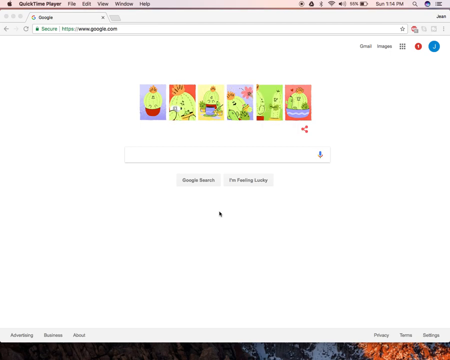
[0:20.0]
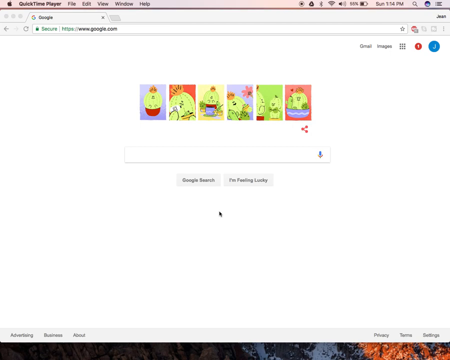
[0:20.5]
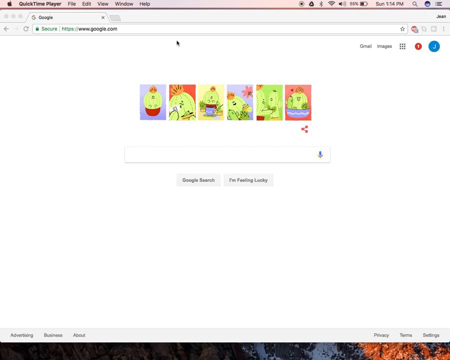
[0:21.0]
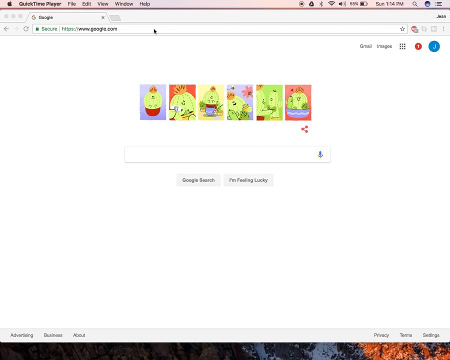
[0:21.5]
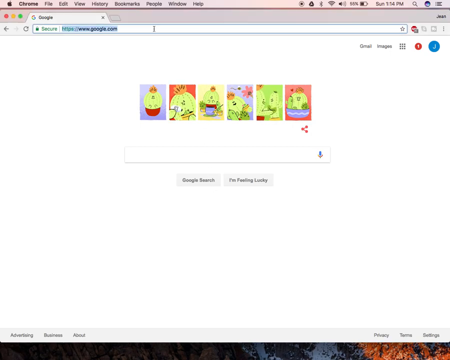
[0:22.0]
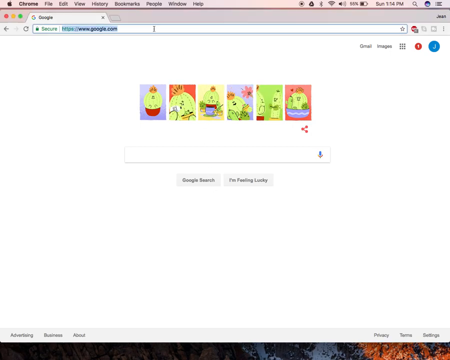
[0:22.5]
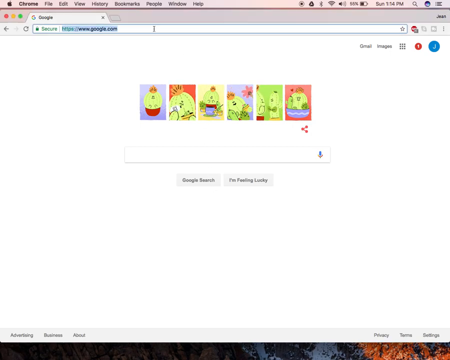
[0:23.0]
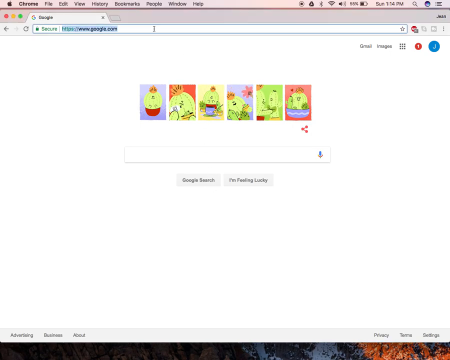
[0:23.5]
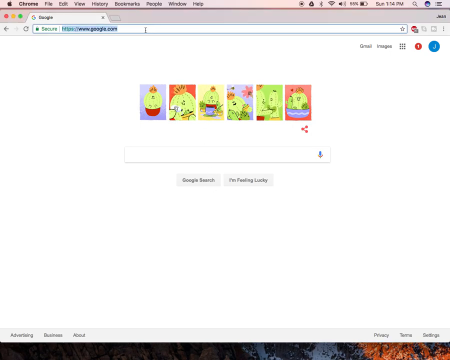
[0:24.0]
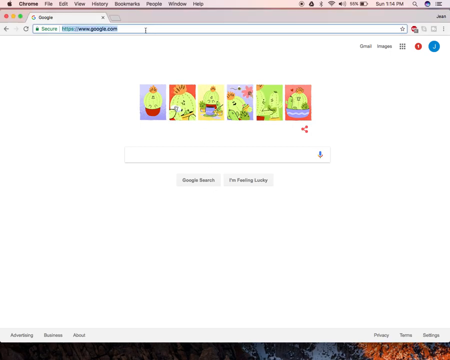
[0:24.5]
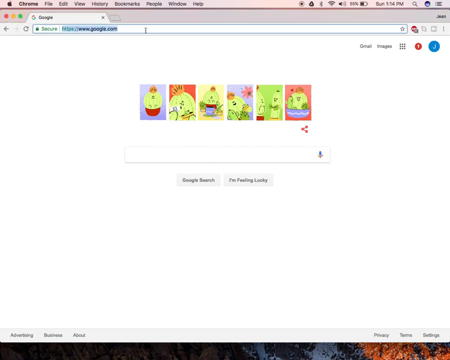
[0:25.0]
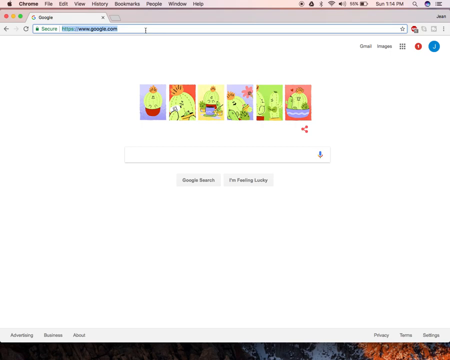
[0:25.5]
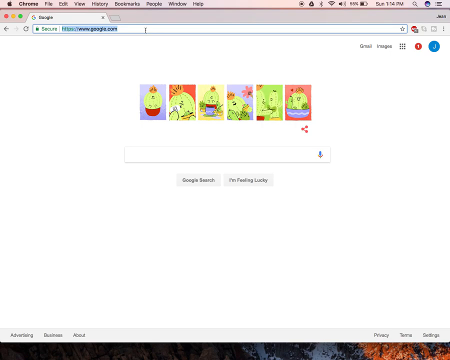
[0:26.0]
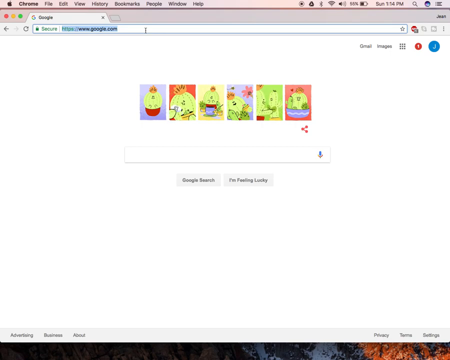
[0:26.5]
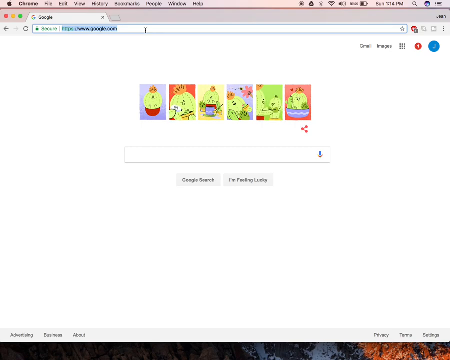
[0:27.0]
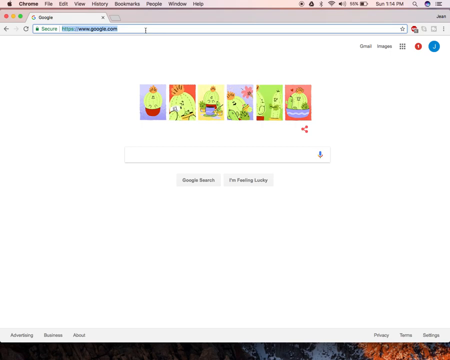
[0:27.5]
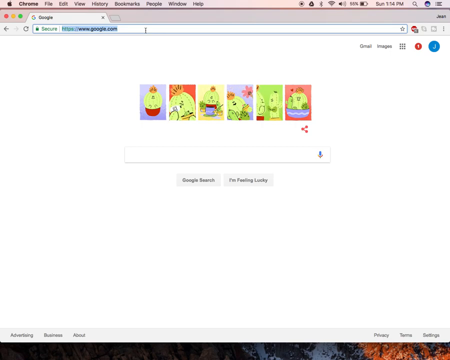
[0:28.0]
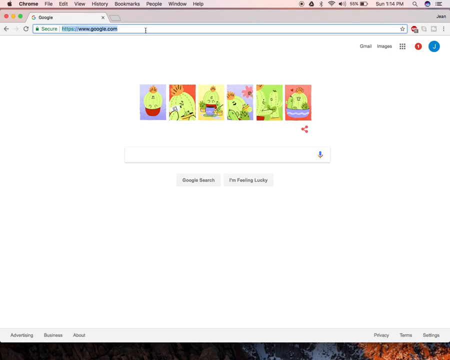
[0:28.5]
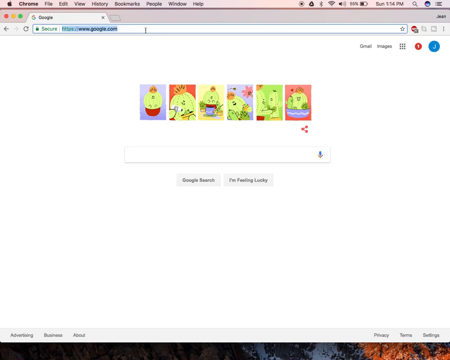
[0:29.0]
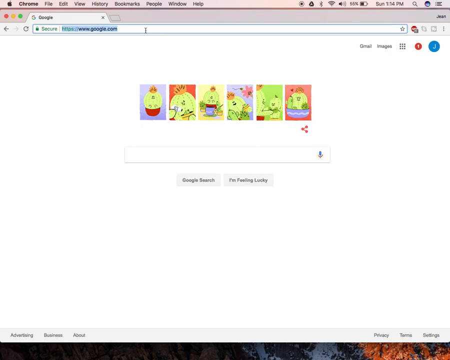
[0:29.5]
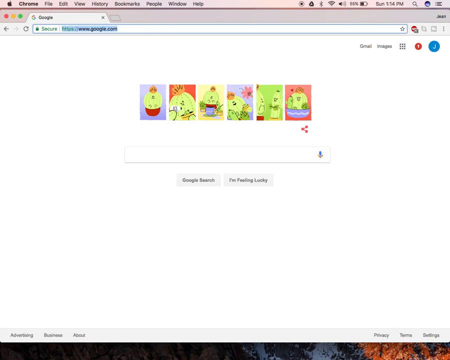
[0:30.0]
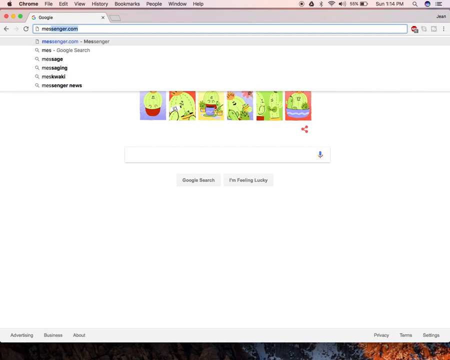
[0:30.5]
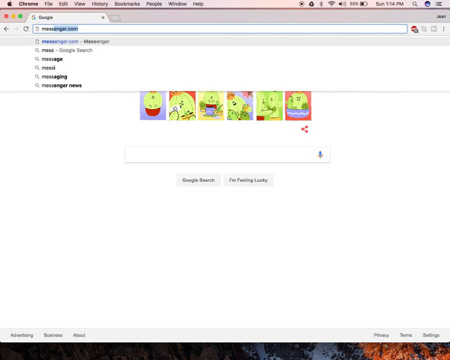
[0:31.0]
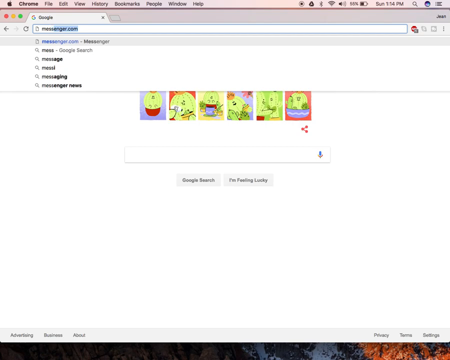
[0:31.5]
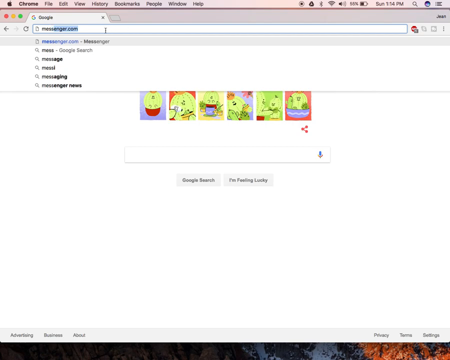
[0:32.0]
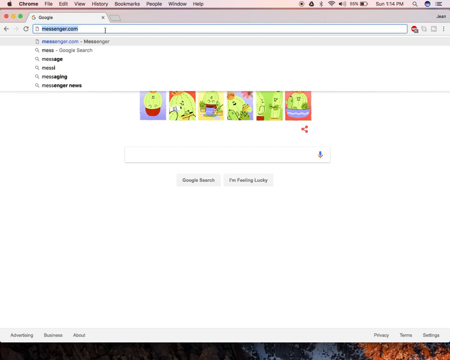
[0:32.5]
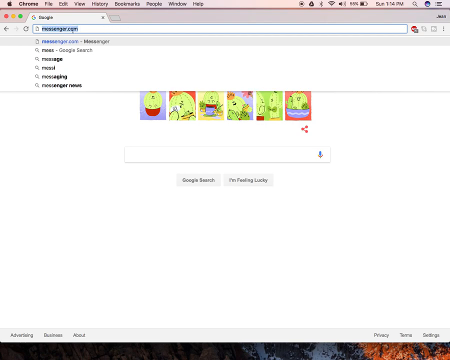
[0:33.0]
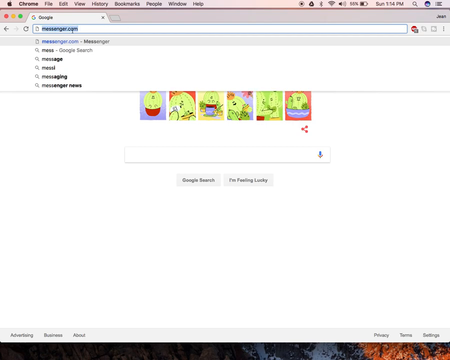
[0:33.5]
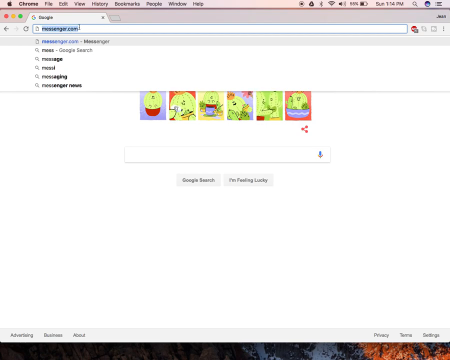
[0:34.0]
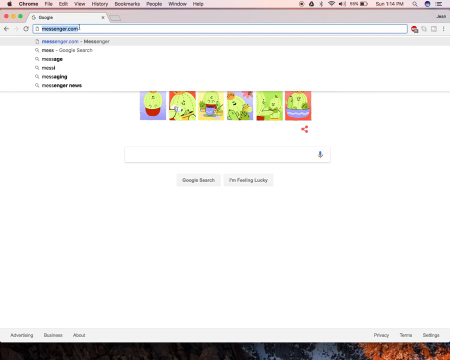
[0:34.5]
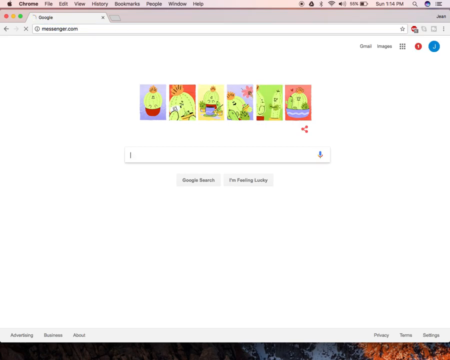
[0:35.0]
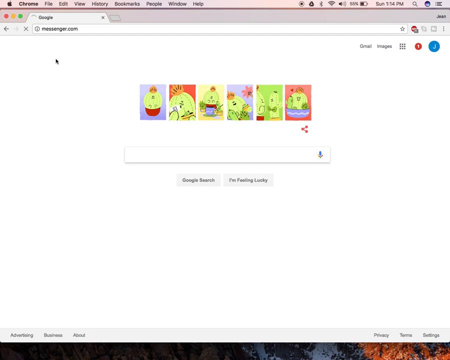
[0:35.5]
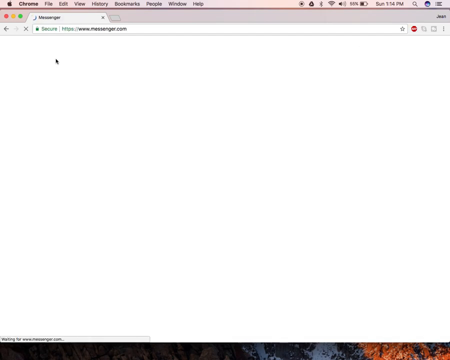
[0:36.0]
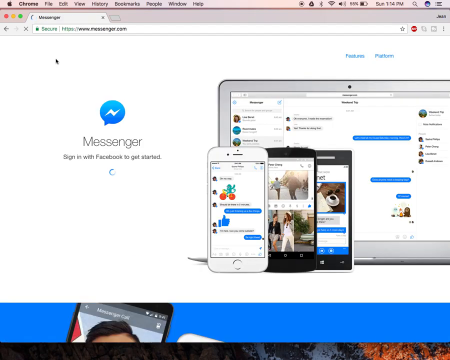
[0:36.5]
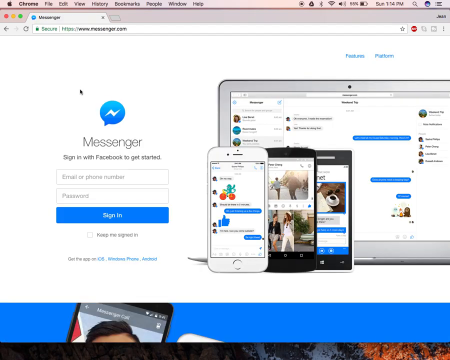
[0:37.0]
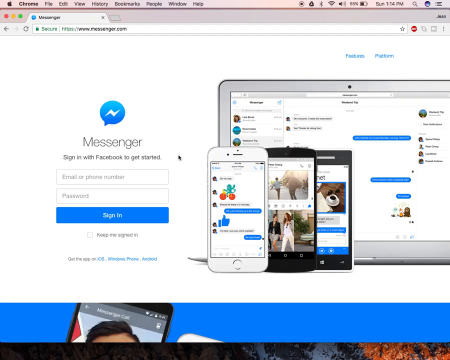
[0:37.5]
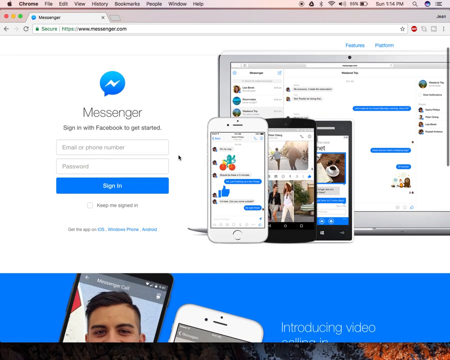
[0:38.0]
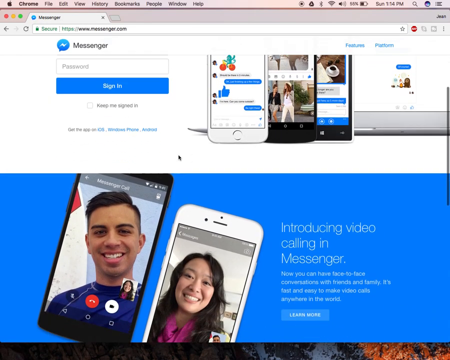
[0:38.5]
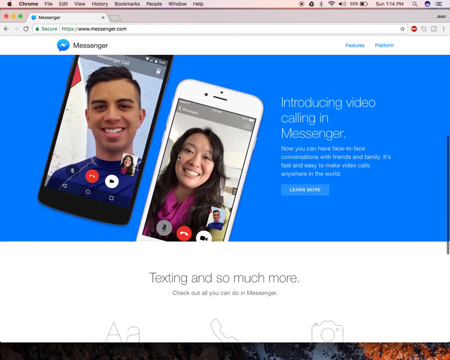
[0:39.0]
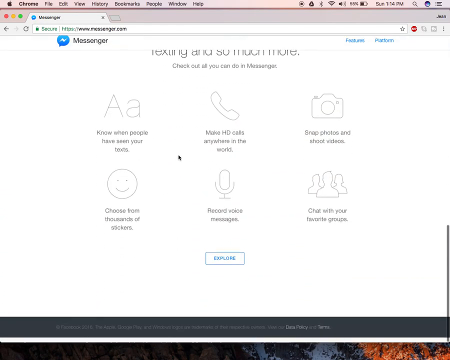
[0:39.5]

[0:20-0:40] In a browser, www.messenger.com is typed into the search bar, and someone explores the different parts of the results that come up for Messenger. The site indicates that Messenger is secure.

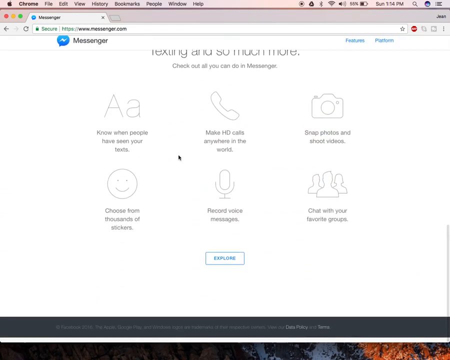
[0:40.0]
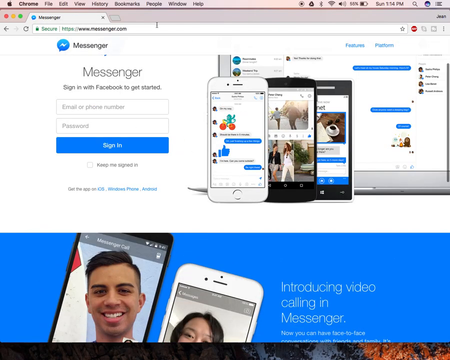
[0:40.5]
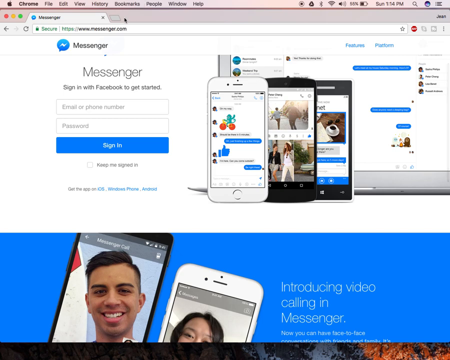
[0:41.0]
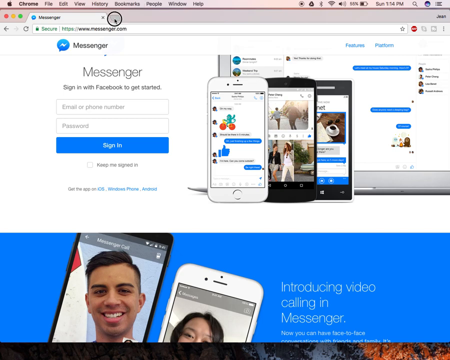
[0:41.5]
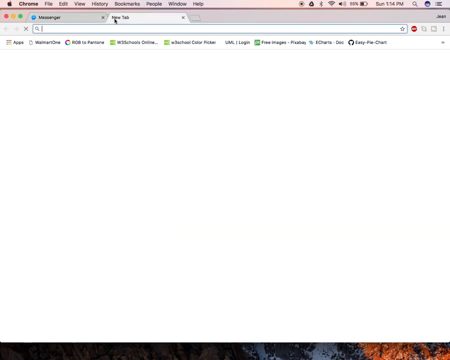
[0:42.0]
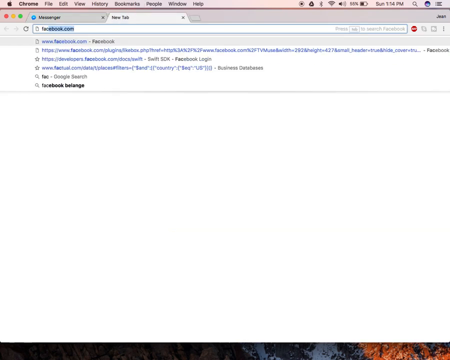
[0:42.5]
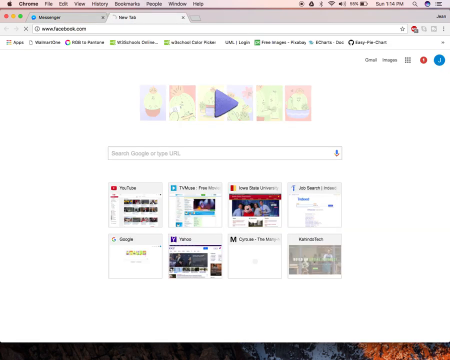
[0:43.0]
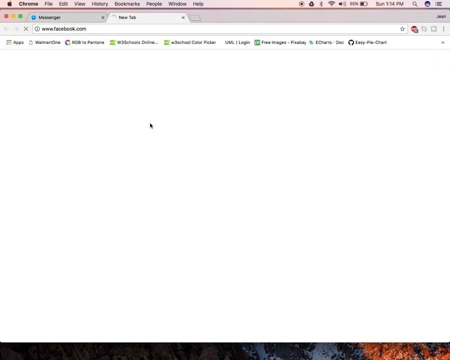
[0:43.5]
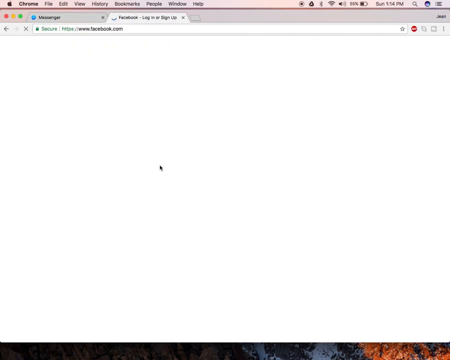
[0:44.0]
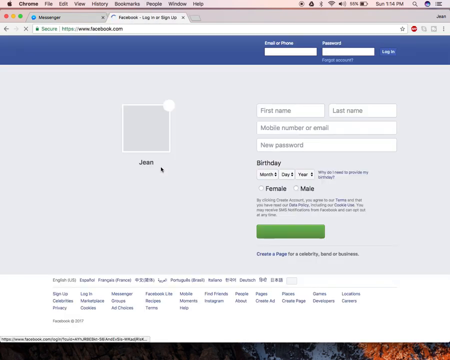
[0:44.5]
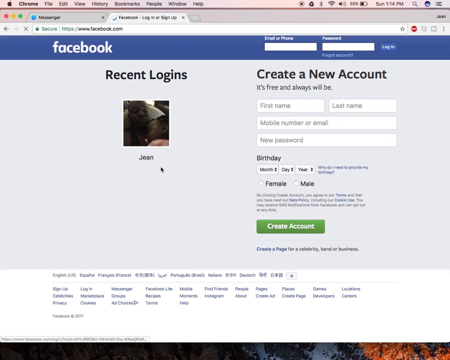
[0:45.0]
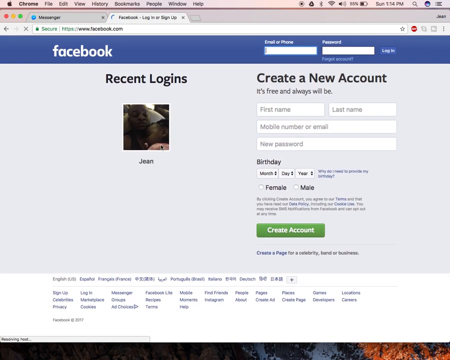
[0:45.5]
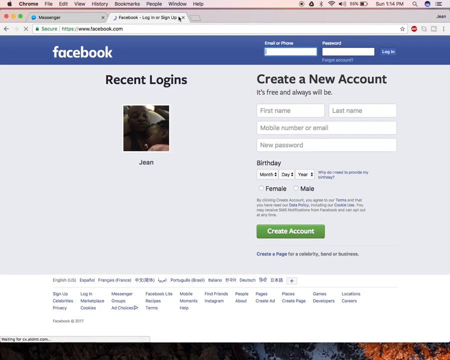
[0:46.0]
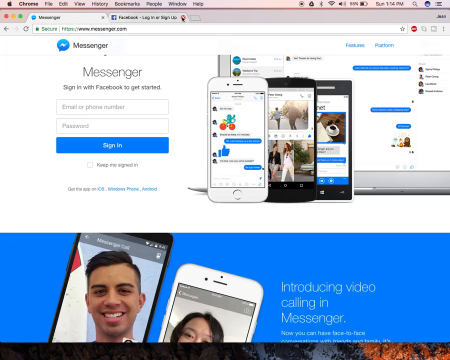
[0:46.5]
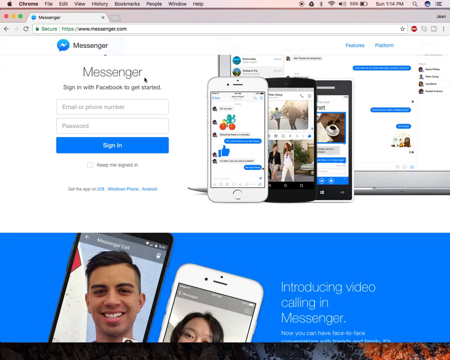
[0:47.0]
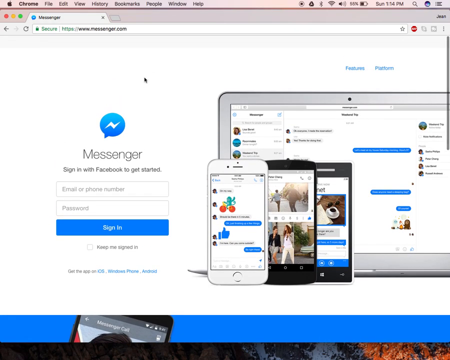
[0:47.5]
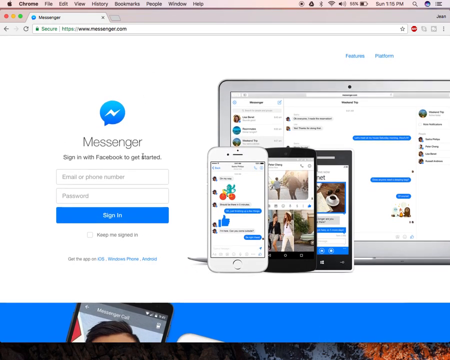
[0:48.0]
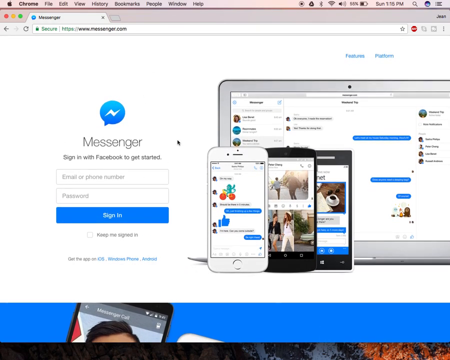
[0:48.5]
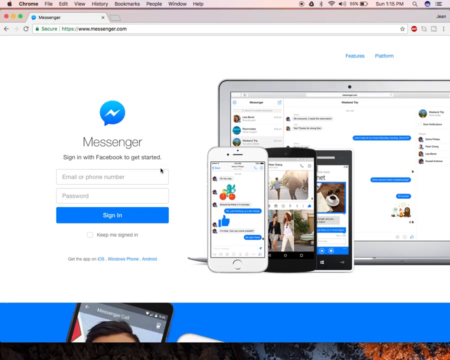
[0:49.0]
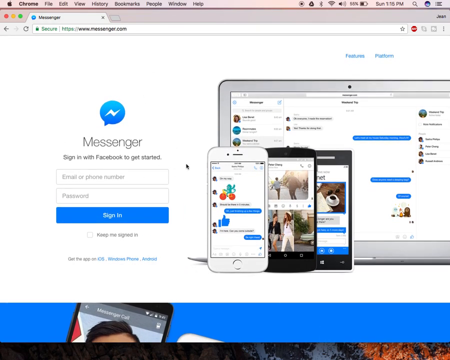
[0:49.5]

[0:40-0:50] Two tabs are open, one with Messenger and one with Facebook. The Messenger page has a video introducing Messenger and a sign in with Facebook option to get started. The Facebook page shows an option to create an account and recent logins. The browser is Chrome.